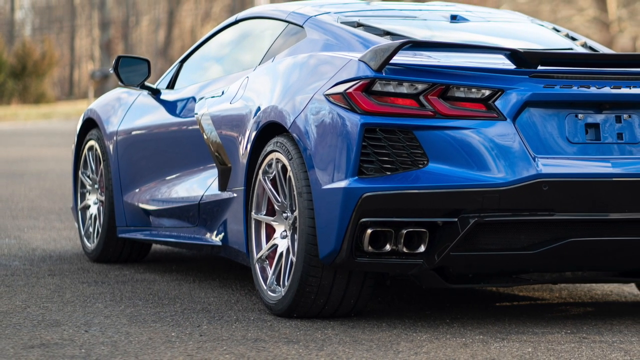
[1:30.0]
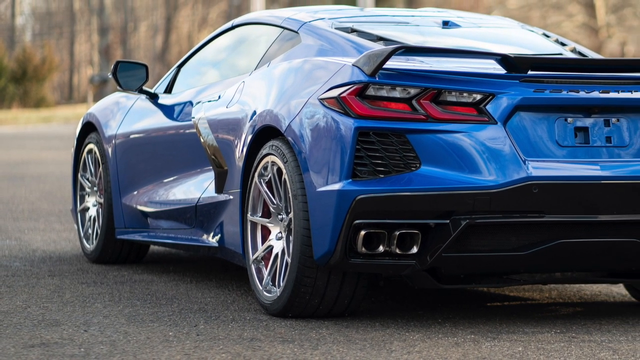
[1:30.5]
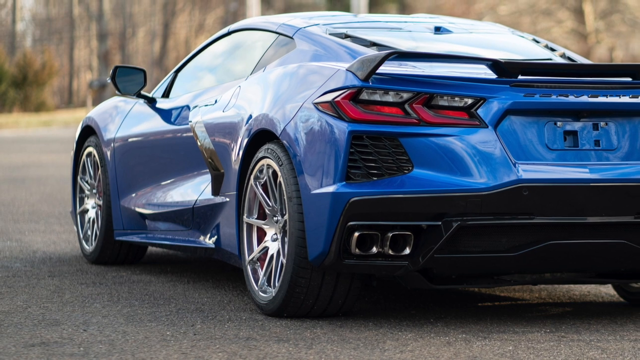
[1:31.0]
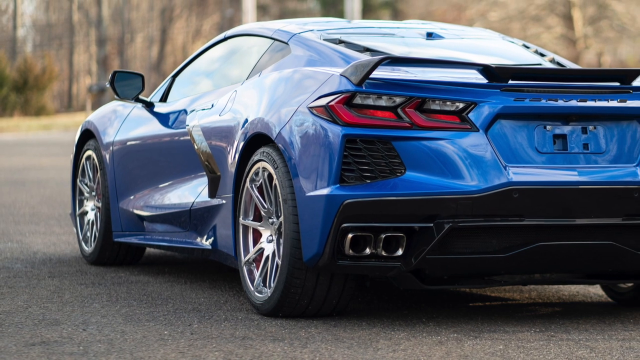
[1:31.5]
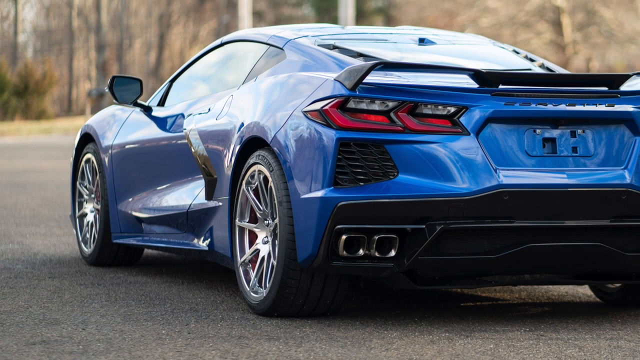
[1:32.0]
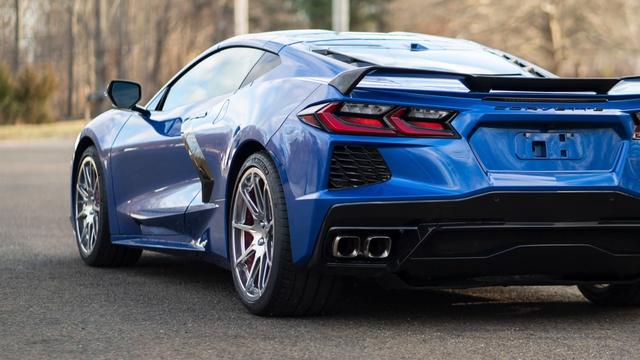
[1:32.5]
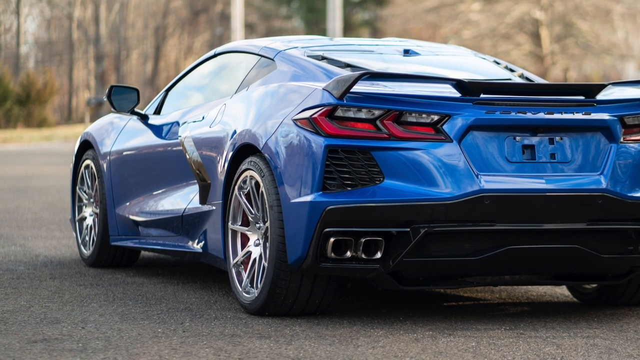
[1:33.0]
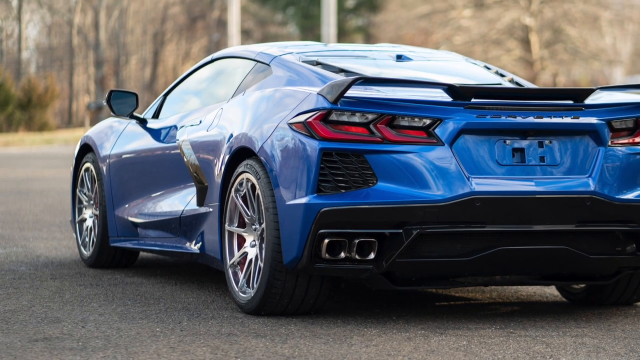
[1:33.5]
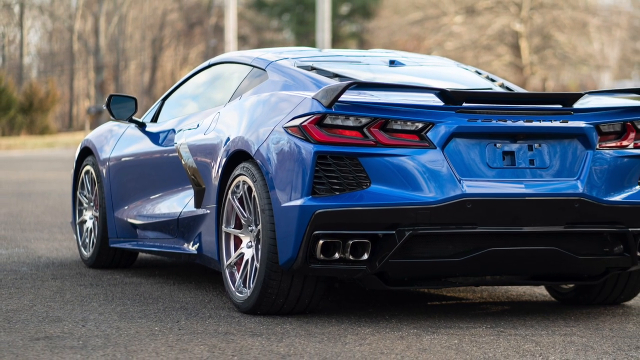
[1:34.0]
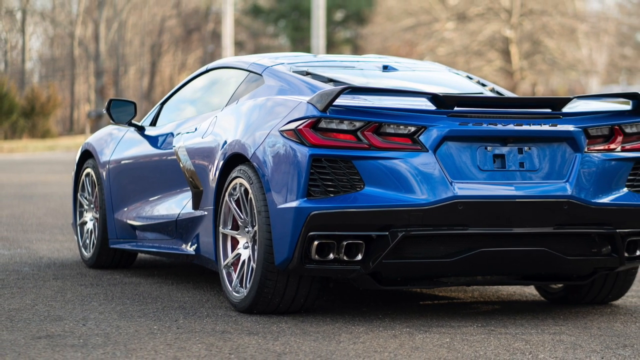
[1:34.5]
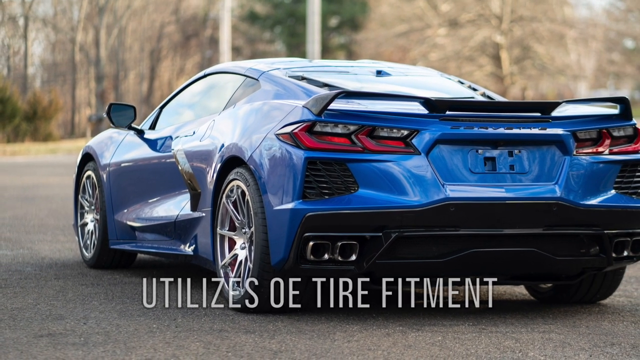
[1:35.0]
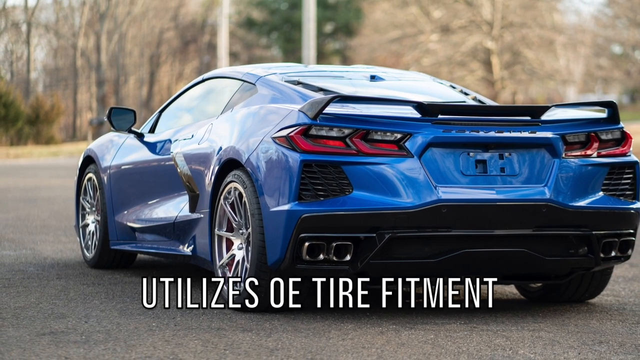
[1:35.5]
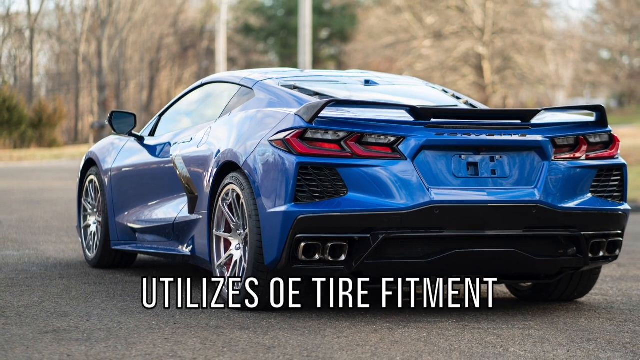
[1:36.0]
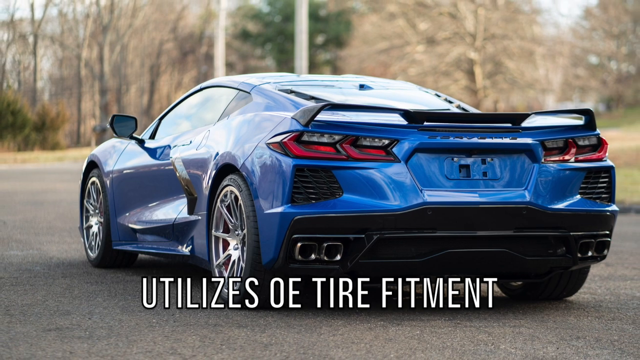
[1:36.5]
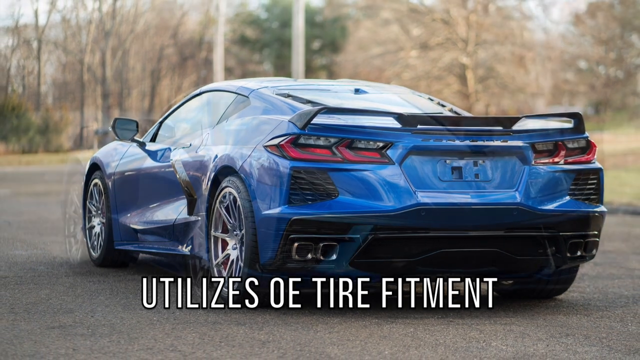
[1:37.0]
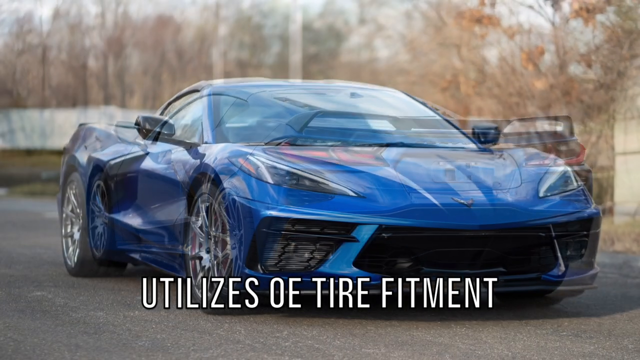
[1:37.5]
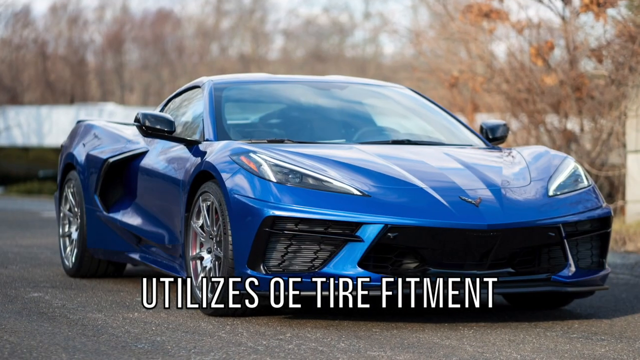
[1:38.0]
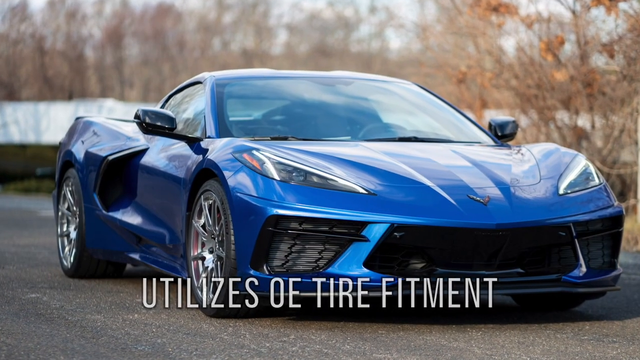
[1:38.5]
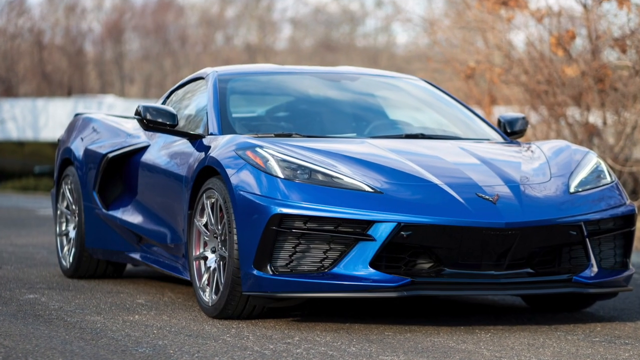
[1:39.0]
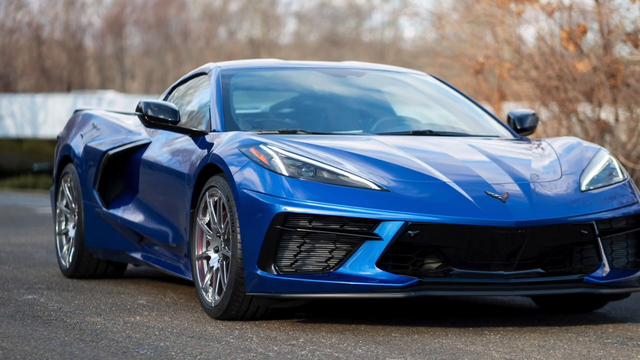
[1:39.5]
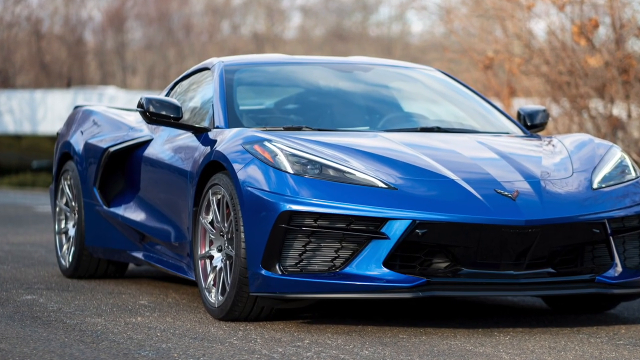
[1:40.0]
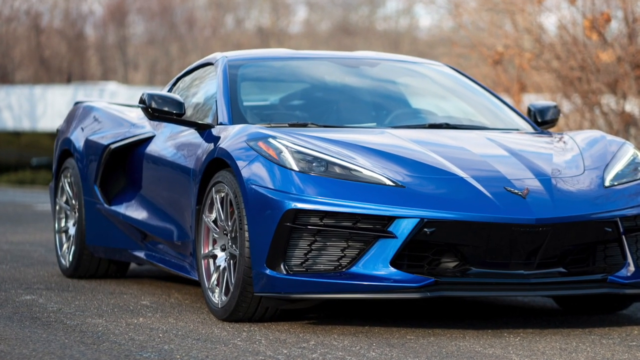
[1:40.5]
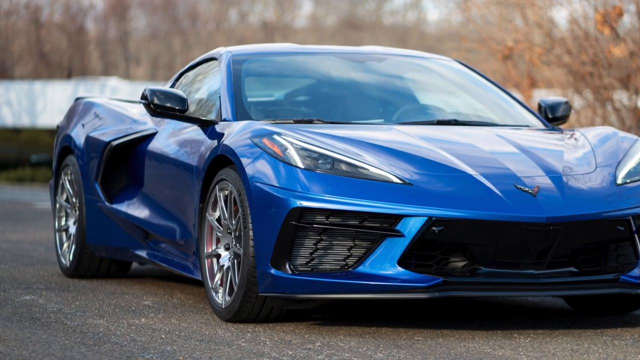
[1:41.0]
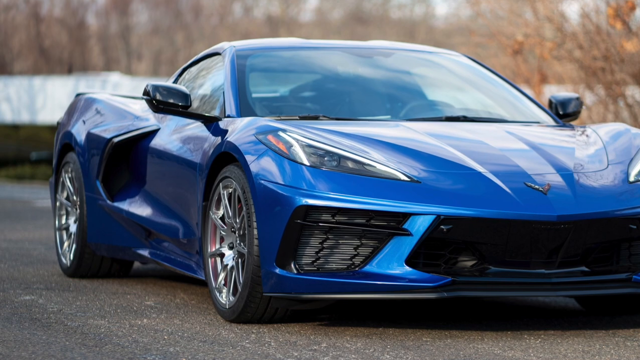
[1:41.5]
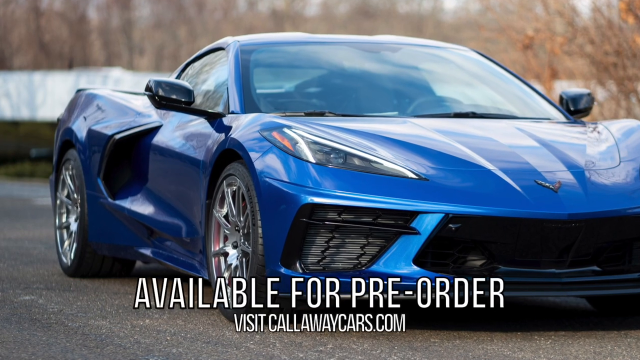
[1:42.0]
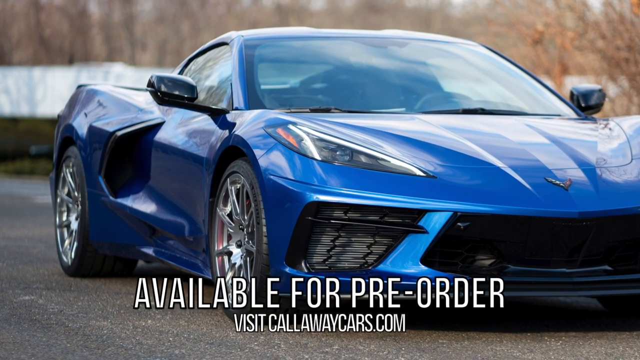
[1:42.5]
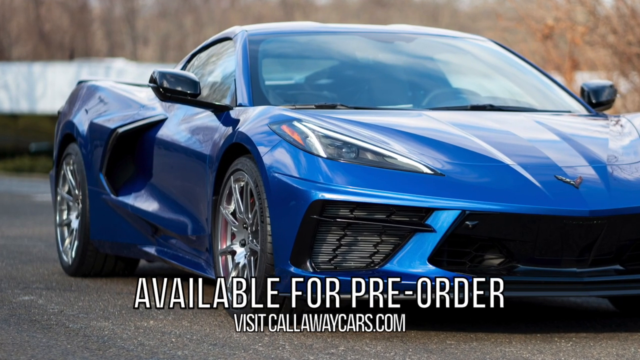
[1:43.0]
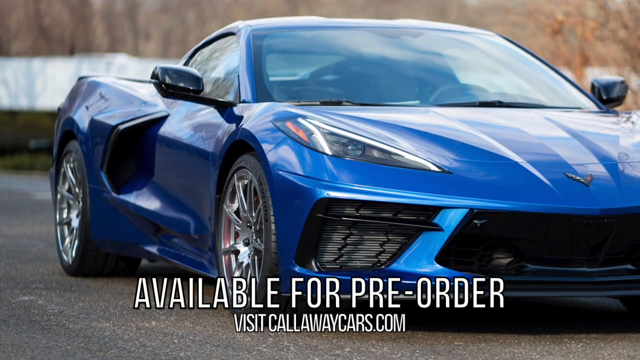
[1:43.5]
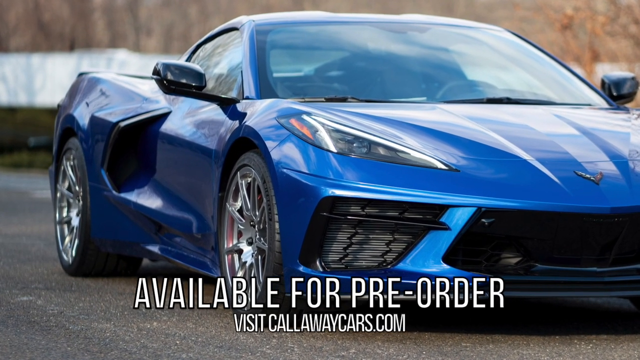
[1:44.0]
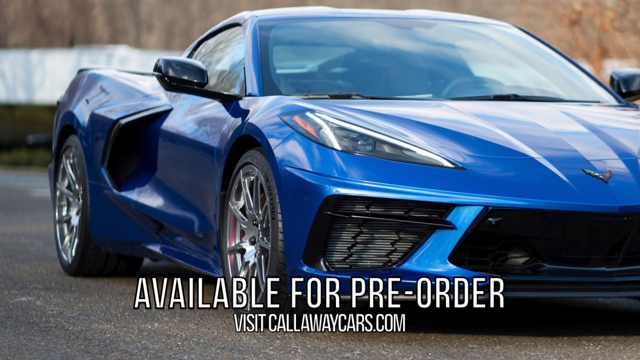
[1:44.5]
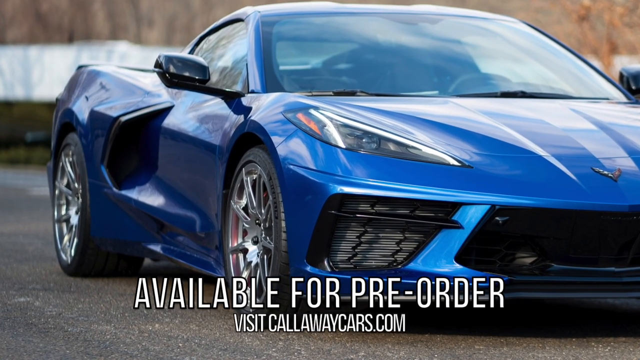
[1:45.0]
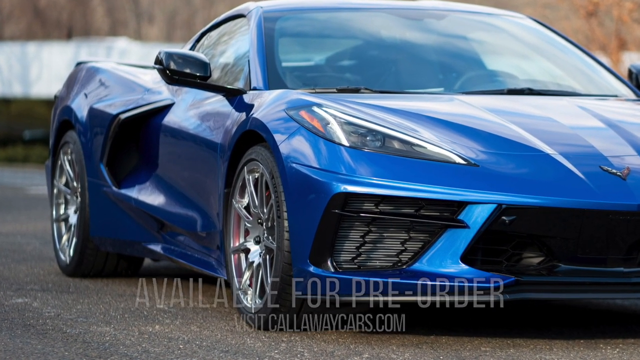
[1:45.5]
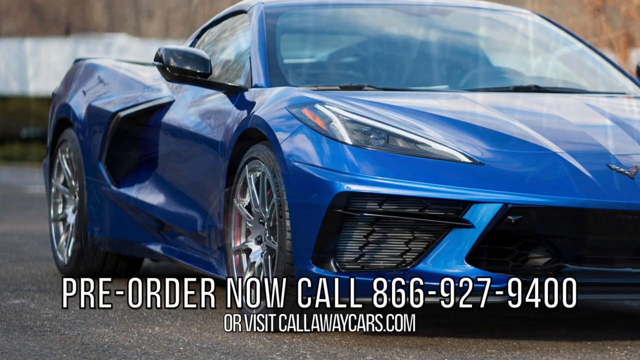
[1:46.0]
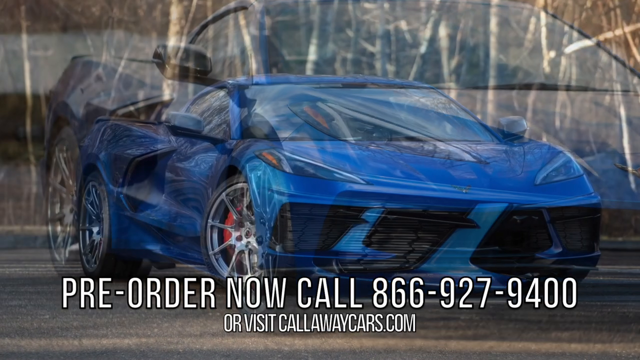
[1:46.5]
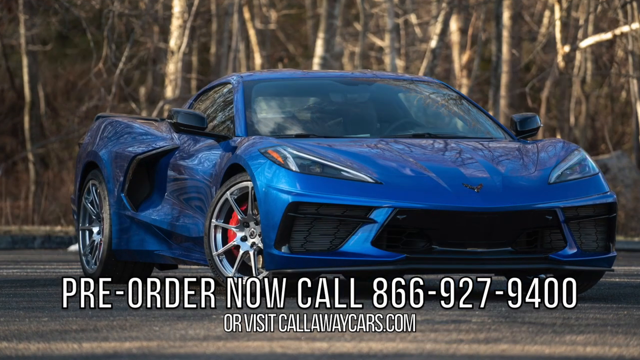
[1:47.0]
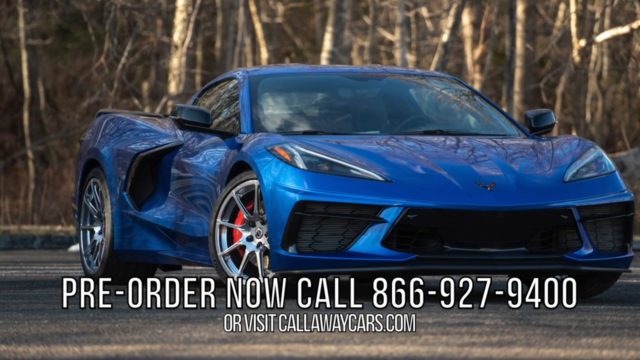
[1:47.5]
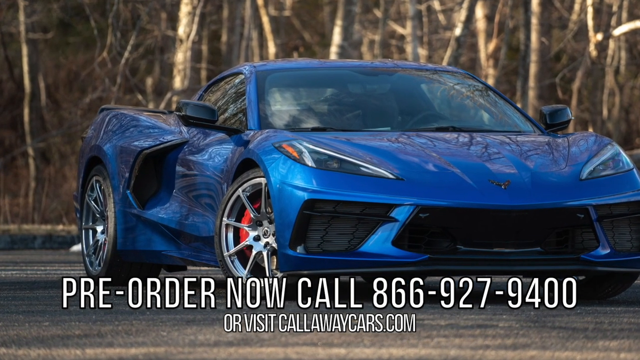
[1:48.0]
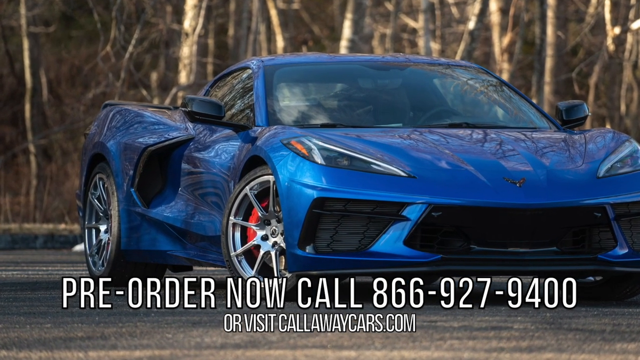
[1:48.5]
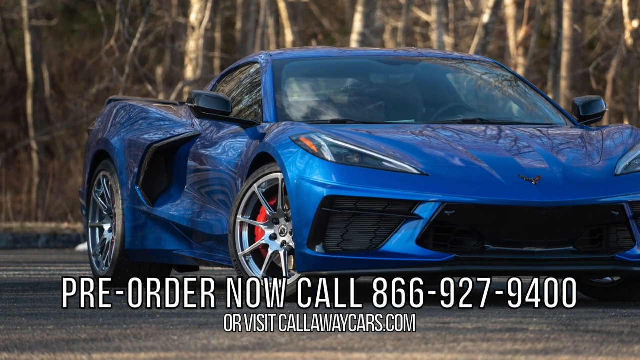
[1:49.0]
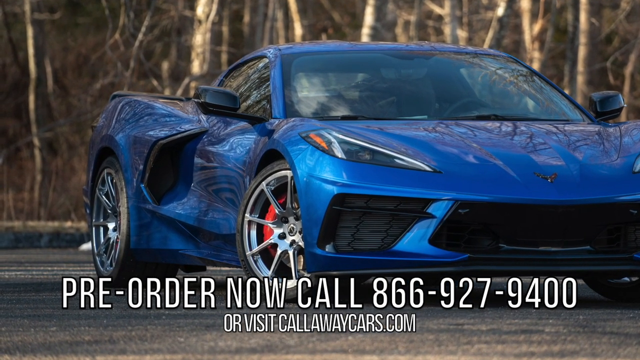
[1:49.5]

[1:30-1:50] The Callaway rims are shown mounted on a newer-model blue Corvette, with text on the screen reading "utilize OE tire fitment." The next image shows the Corvette facing forward, with the rims visible on the front and rear wheels. Text says the rims are "available for pre-order, visit callawaycars.com," and then "pre-orders now call 866-927-9400 or visit callawaycars.com." The images cycle through the blue Corvette from different angles, showing the silver rims mounted on it. One image toward the end shows the Corvette facing forward, viewed from the hood looking back toward the rear of the car, with the front wheel turned to the right; the full rim on the front wheel is visible, and the back rim is seen from a side angle.